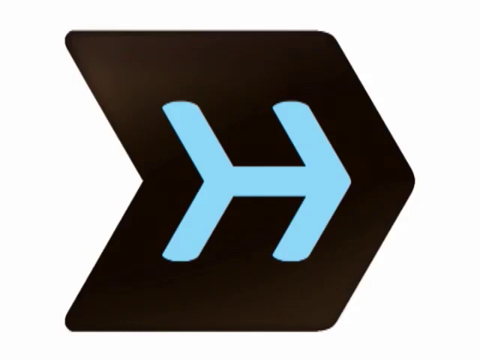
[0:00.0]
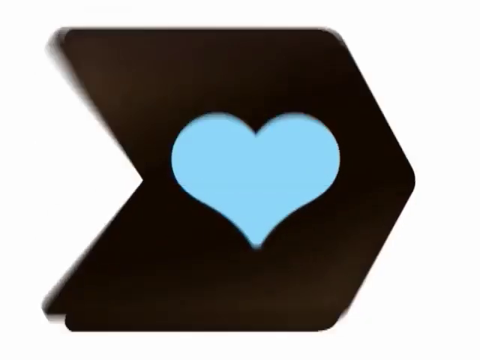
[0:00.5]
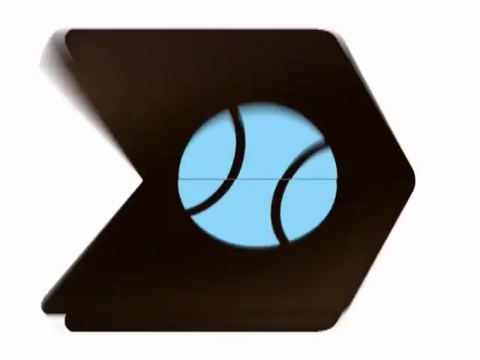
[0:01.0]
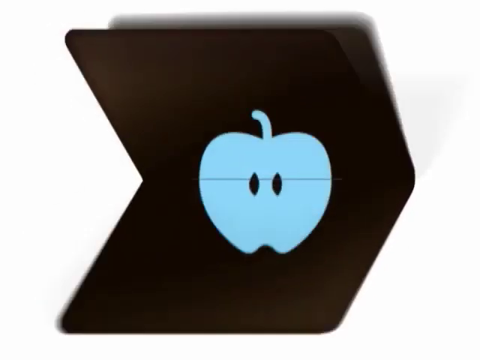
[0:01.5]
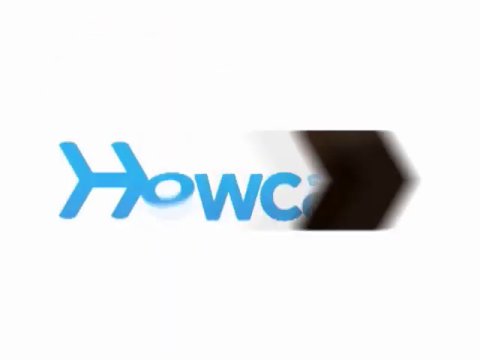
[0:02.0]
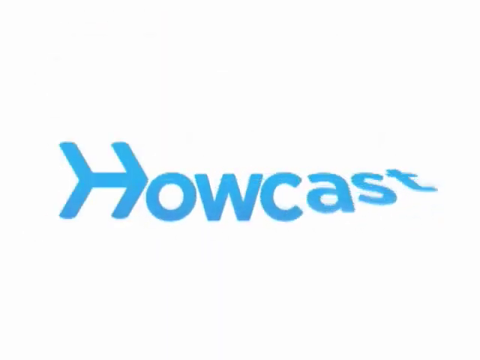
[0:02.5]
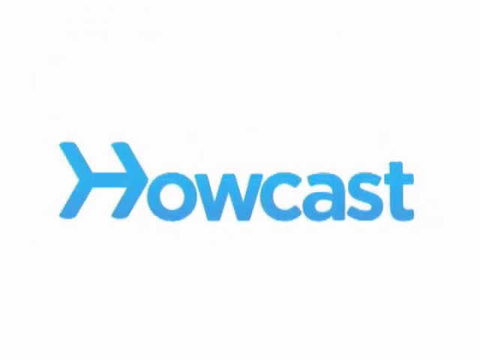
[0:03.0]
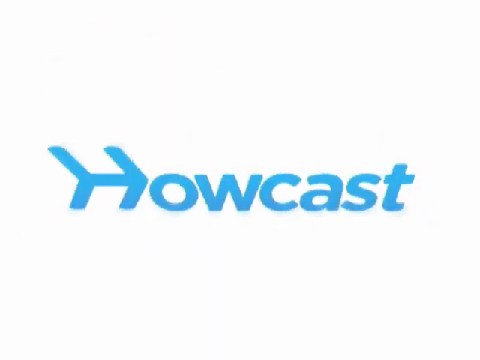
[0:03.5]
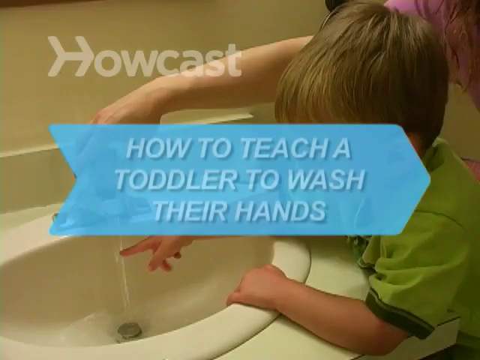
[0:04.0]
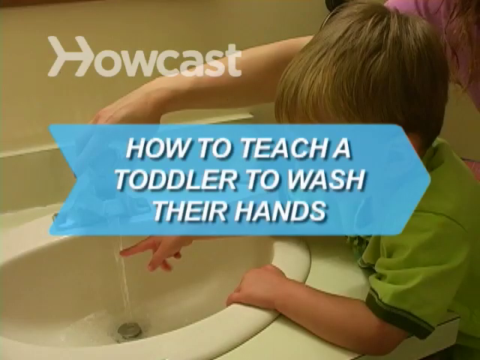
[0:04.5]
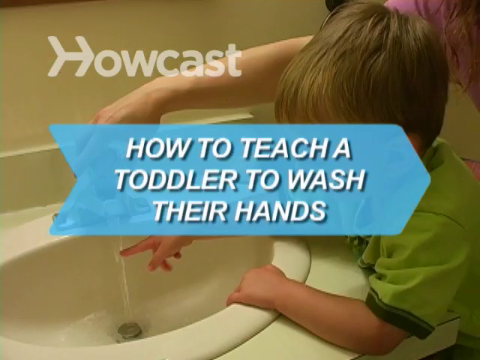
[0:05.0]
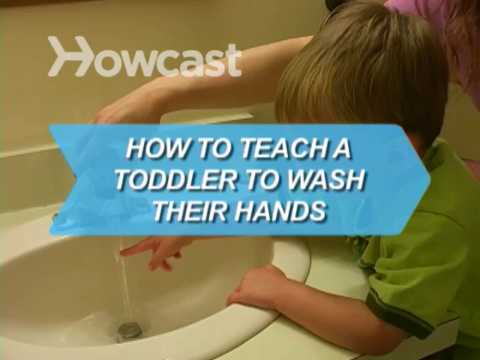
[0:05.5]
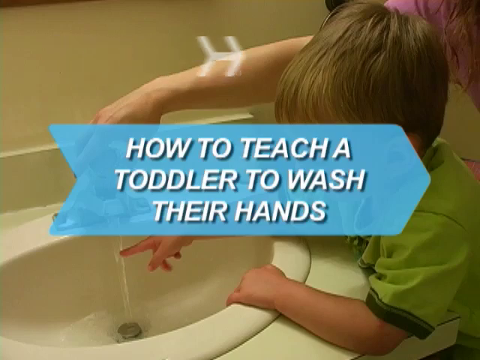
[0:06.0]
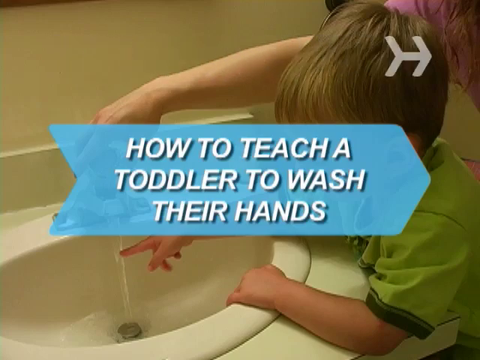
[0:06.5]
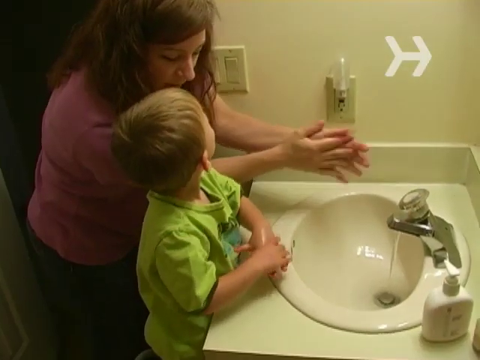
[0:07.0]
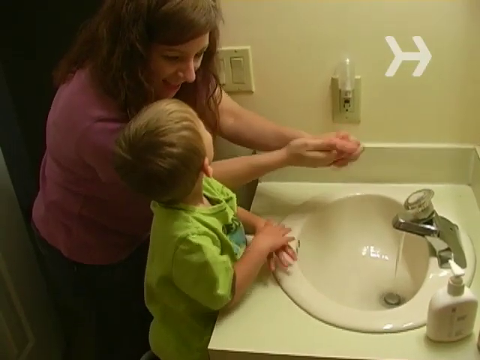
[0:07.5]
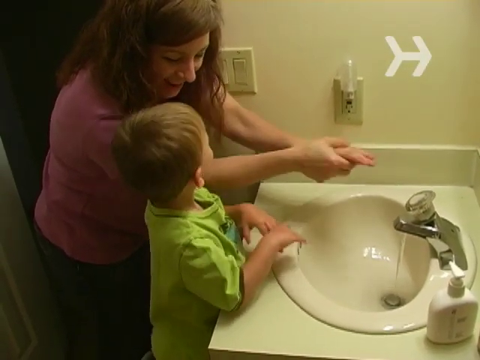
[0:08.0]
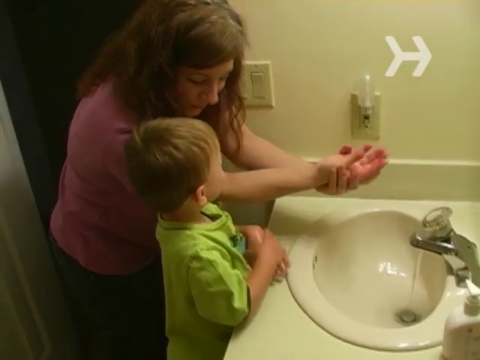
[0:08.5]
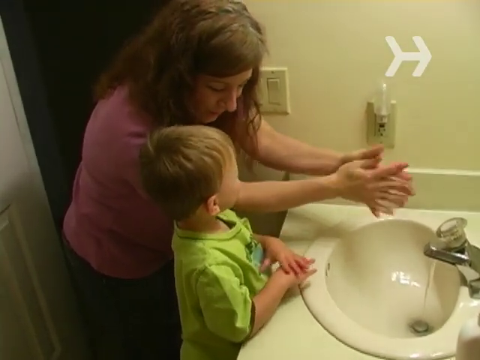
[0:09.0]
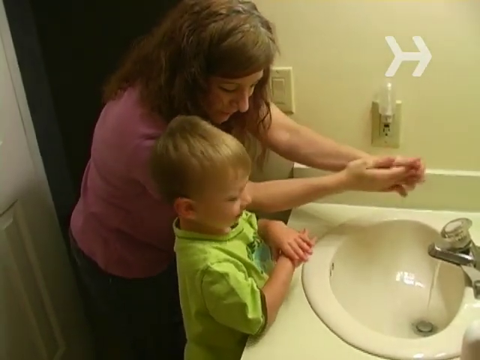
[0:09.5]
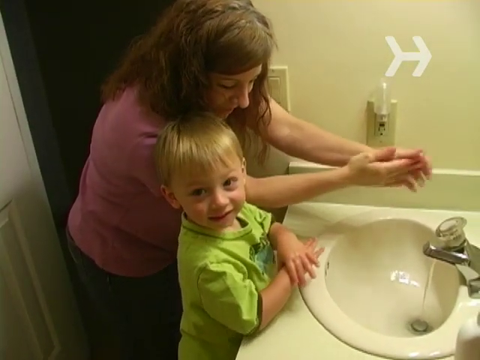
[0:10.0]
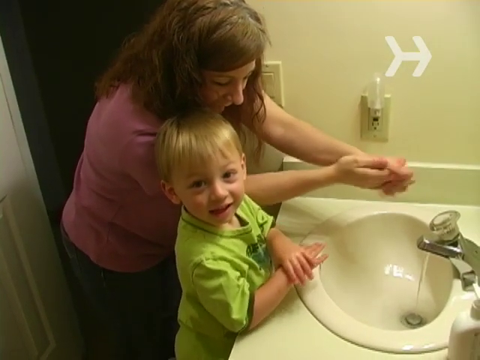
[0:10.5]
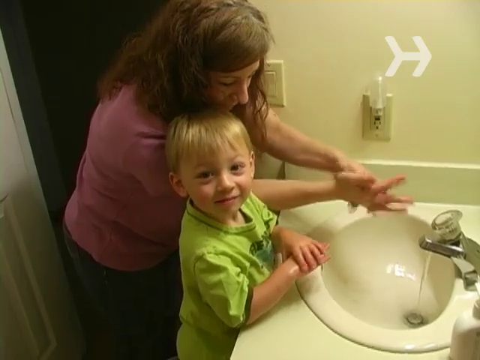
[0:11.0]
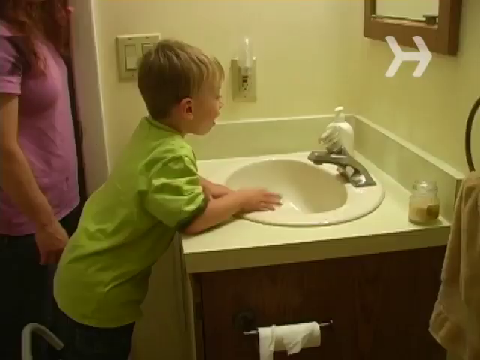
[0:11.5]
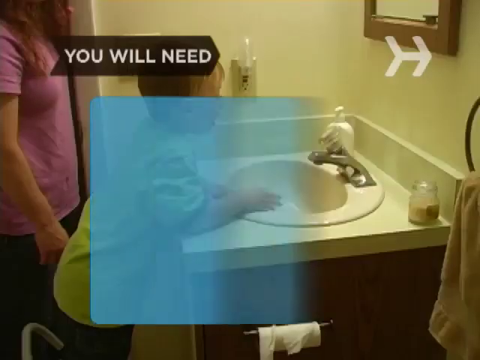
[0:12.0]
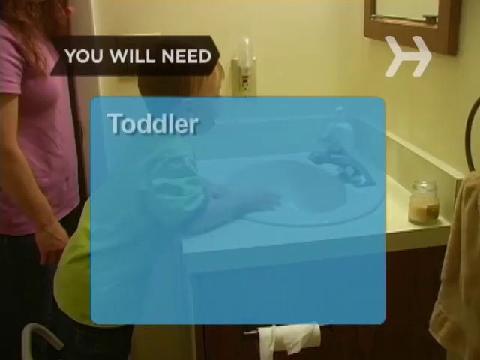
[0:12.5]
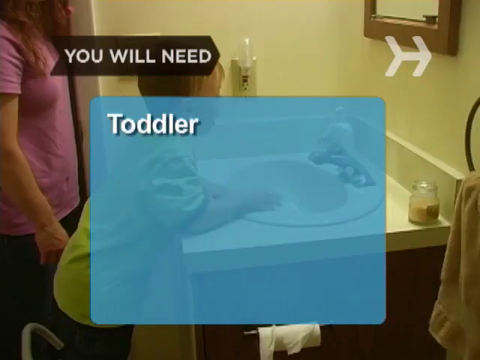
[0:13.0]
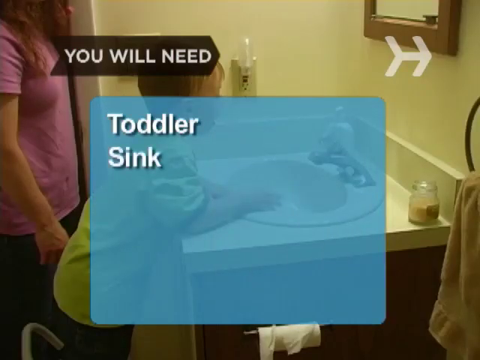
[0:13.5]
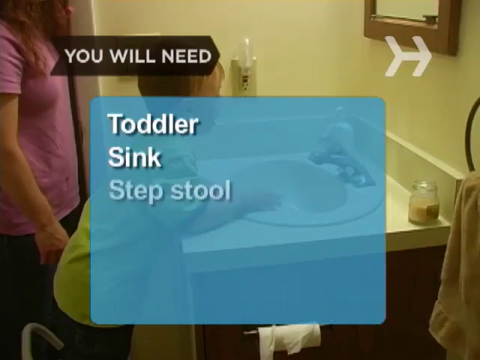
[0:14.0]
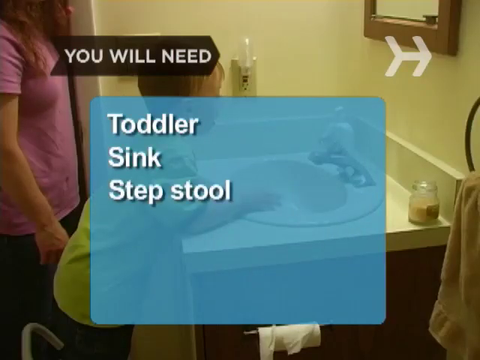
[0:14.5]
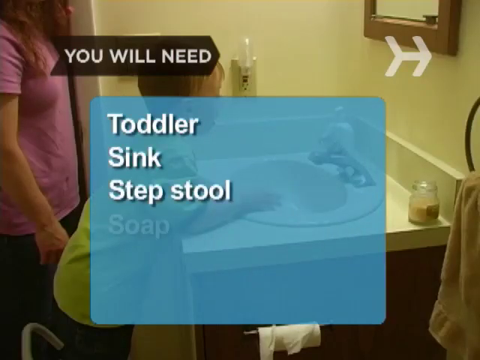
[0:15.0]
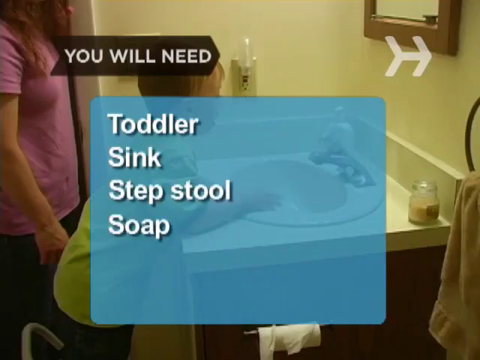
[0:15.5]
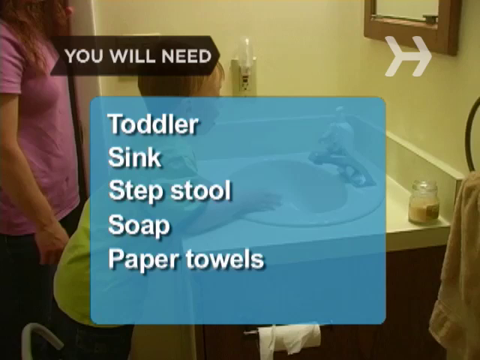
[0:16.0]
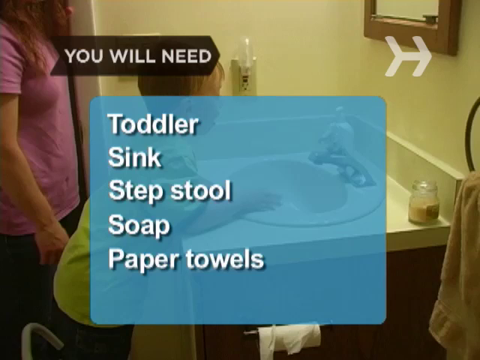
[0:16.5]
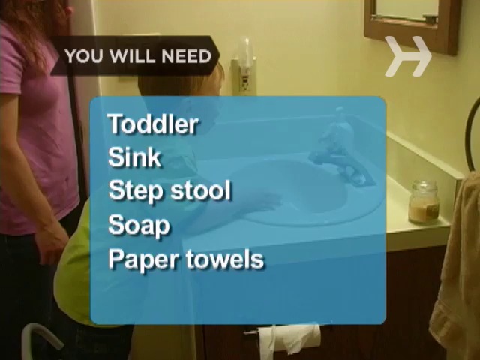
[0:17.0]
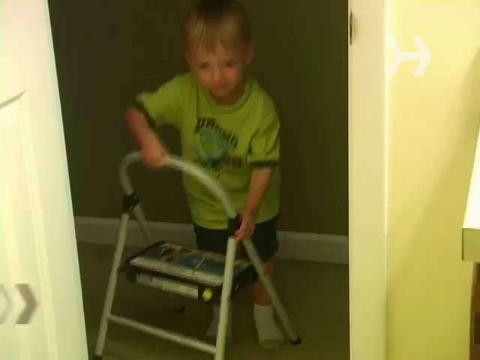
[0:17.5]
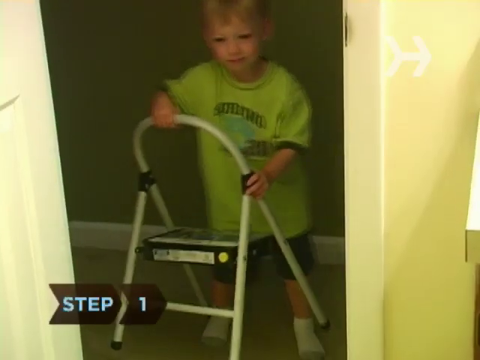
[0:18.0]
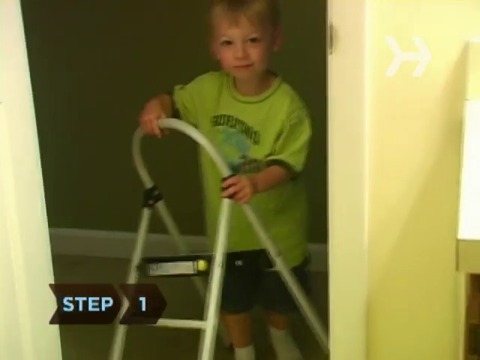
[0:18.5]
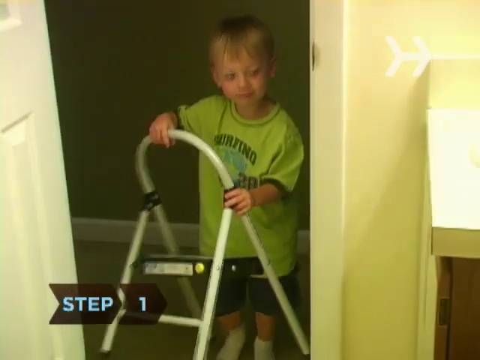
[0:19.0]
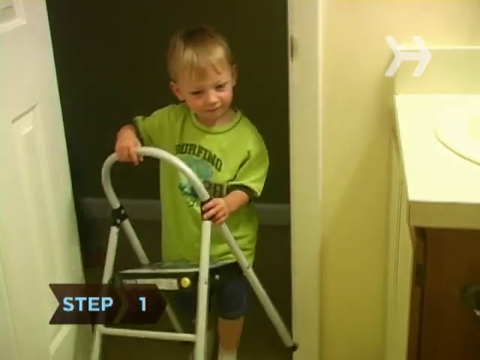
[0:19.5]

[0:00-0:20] This how-to video is presented by Howcast and is titled How to Teach a Toddler to Wash Their Hands. It shows what appears to be a mother and a young child in a restroom with a very small sink; the countertop is only barely larger than the sink itself. The toddler looks up at whoever is filming, probably the father. Text on screen reads "you will need" and lists a toddler, a sink, a step stool, soap, and paper towels. The series graphic is an H whose vertical bars on the left side are angled backwards, while the right side forms sort of an arrow shape that is also an H. A few text graphic overlays appear at the beginning, then the child is shown, then a text overlay appears again. The toddler walks in with a step stool, getting ready to put it in front of the sink, and as he walks up with the stool a "step one" text graphic appears along the bottom.